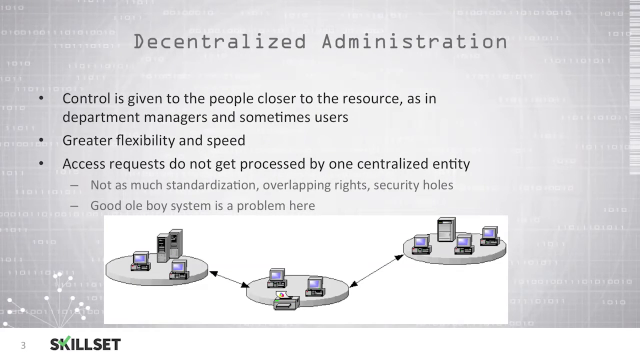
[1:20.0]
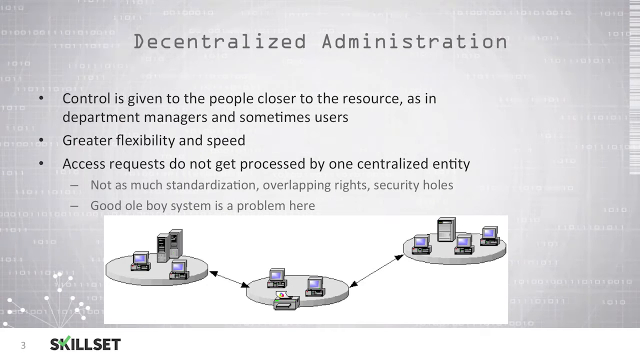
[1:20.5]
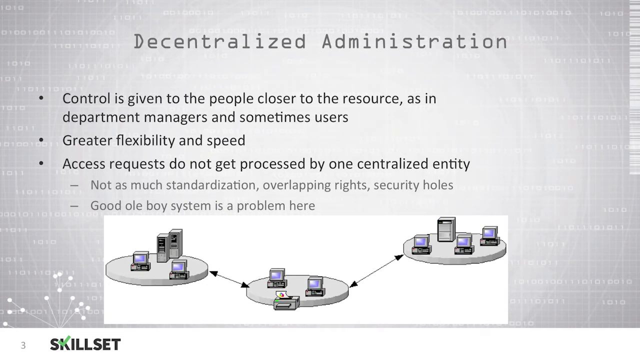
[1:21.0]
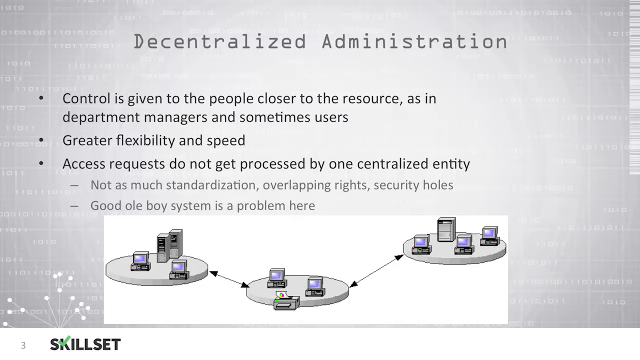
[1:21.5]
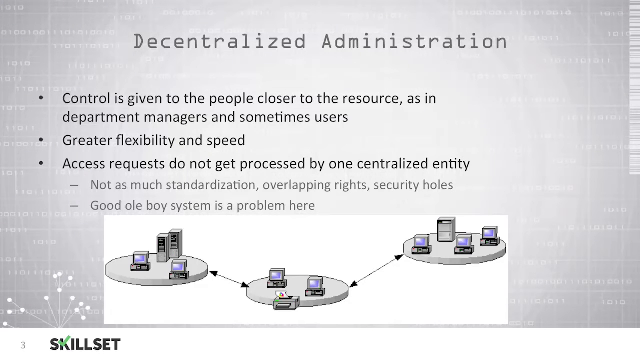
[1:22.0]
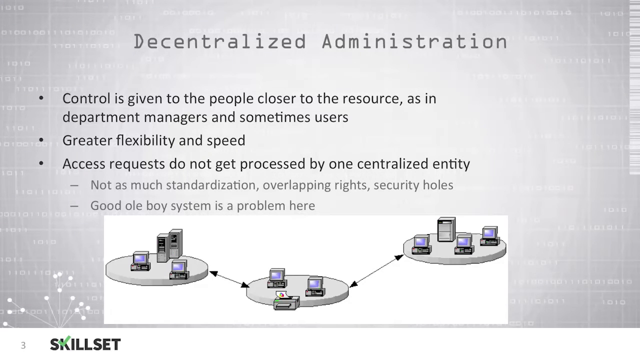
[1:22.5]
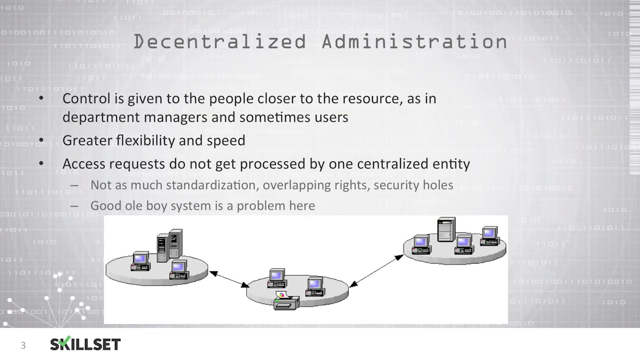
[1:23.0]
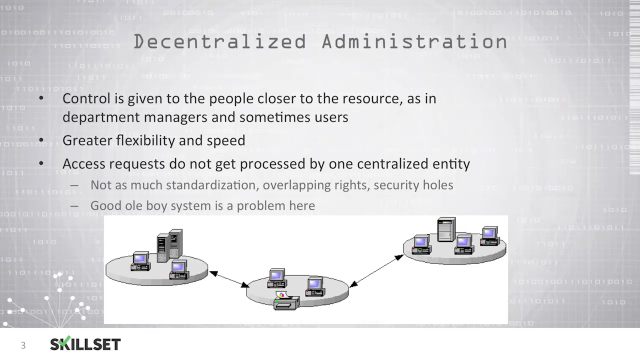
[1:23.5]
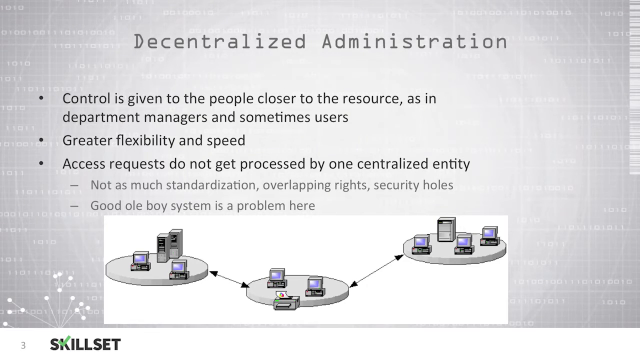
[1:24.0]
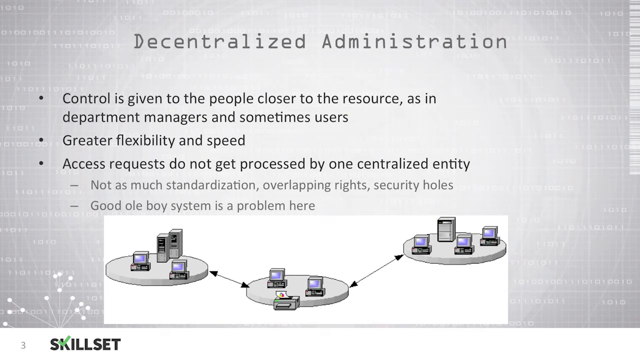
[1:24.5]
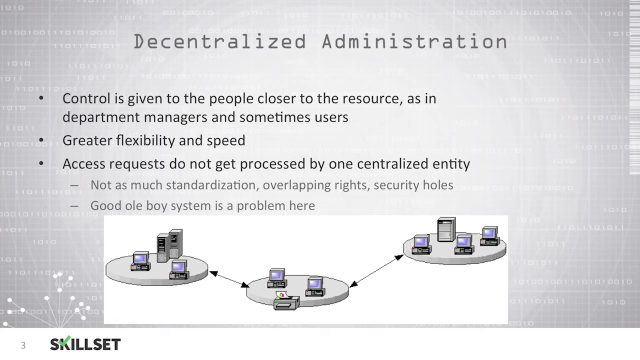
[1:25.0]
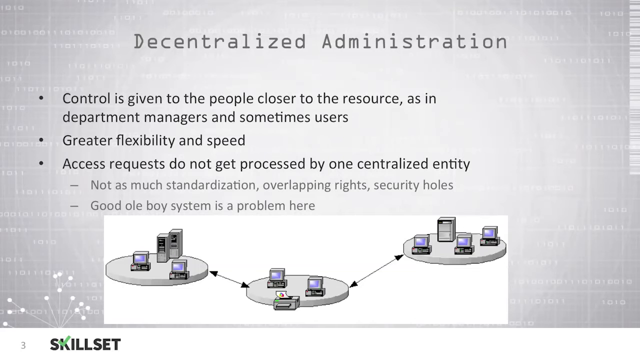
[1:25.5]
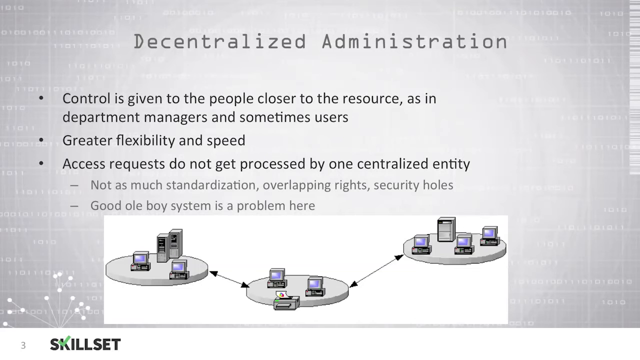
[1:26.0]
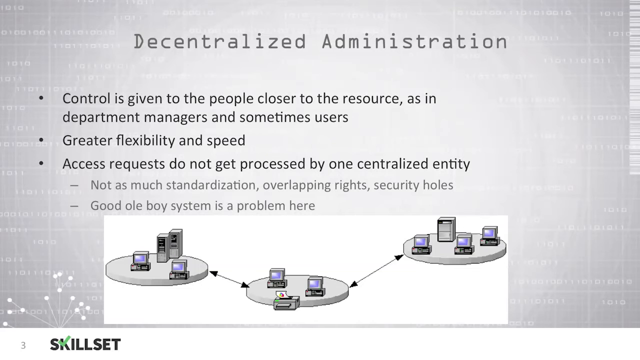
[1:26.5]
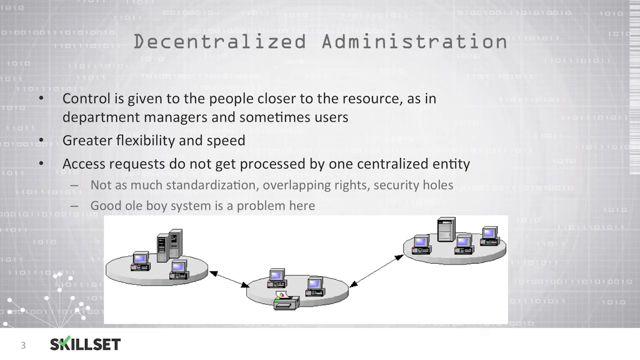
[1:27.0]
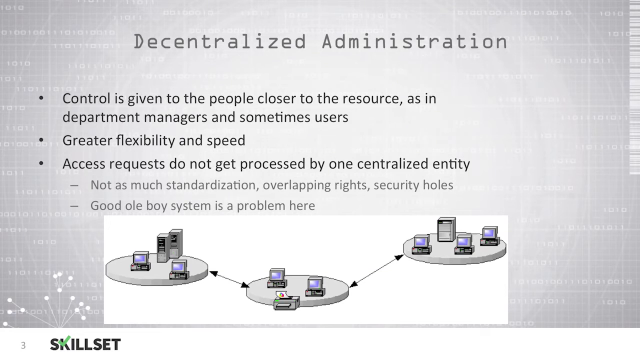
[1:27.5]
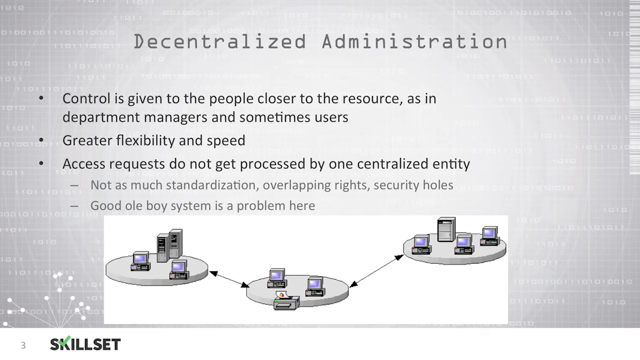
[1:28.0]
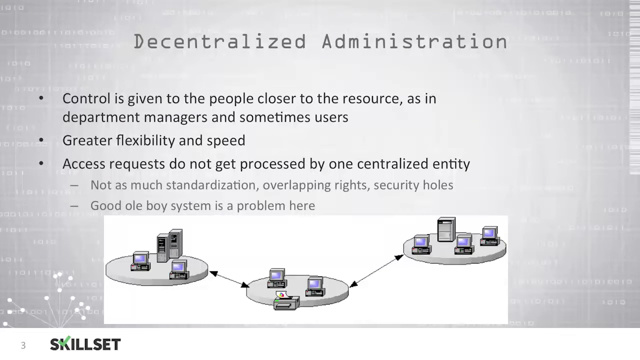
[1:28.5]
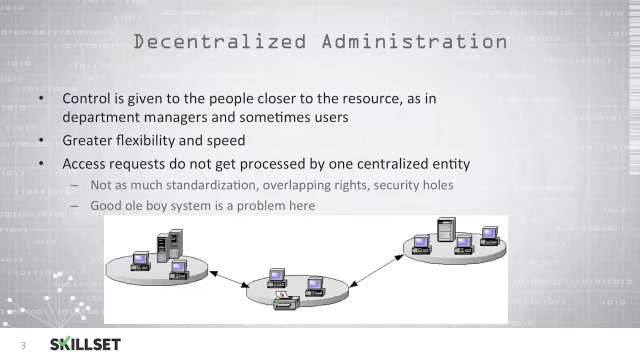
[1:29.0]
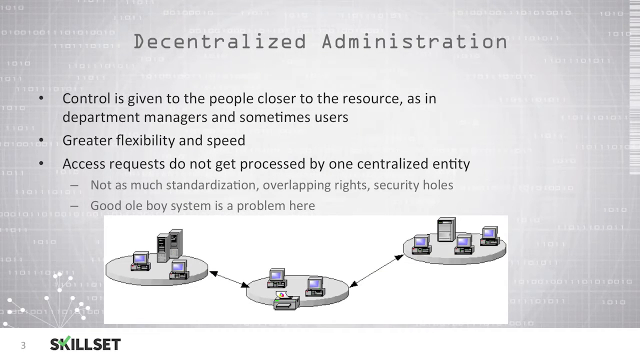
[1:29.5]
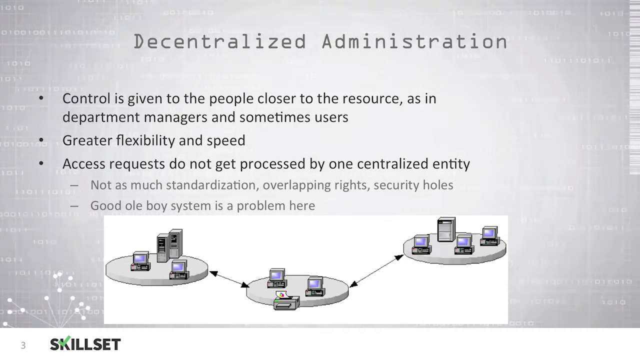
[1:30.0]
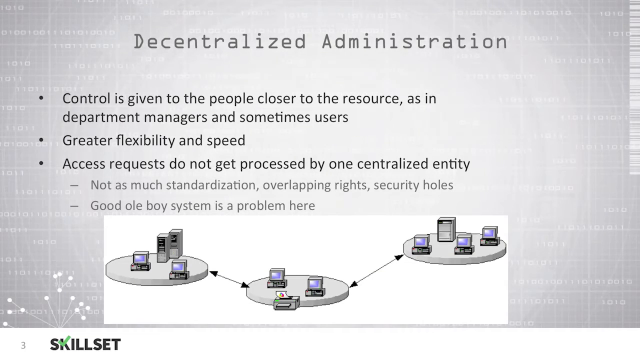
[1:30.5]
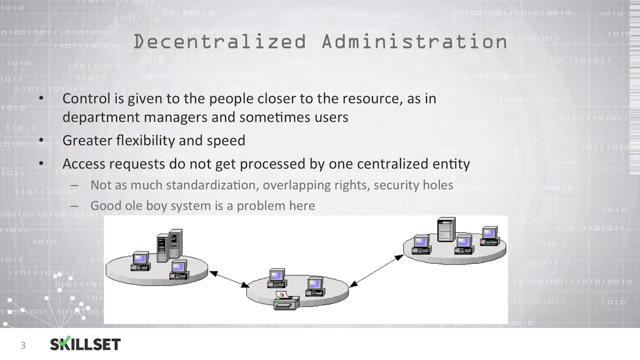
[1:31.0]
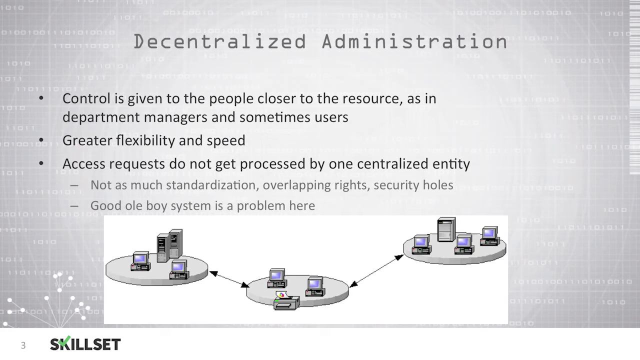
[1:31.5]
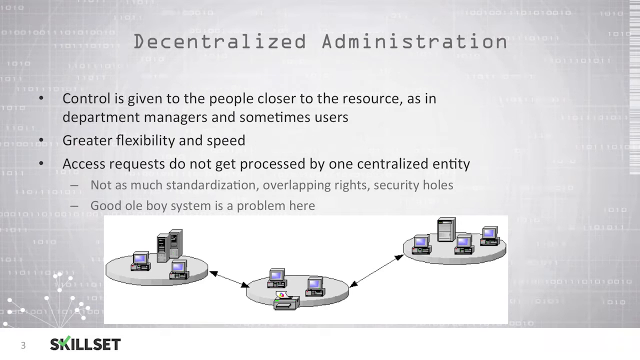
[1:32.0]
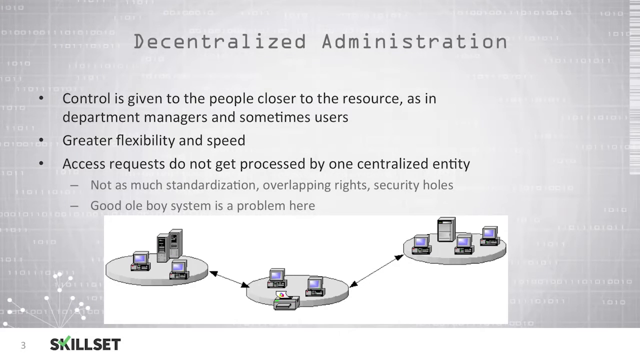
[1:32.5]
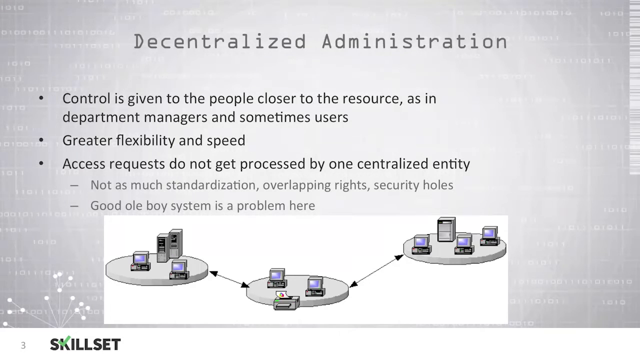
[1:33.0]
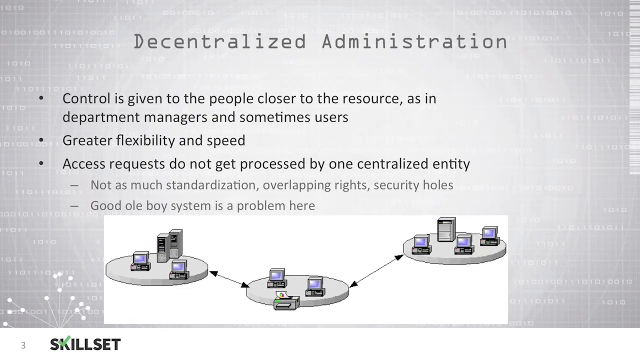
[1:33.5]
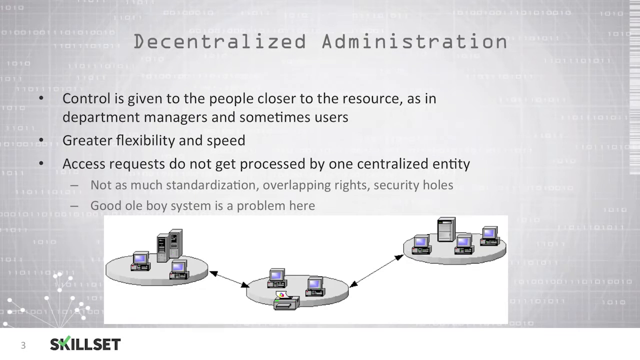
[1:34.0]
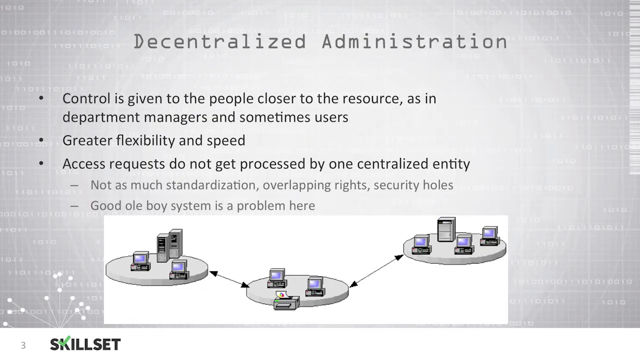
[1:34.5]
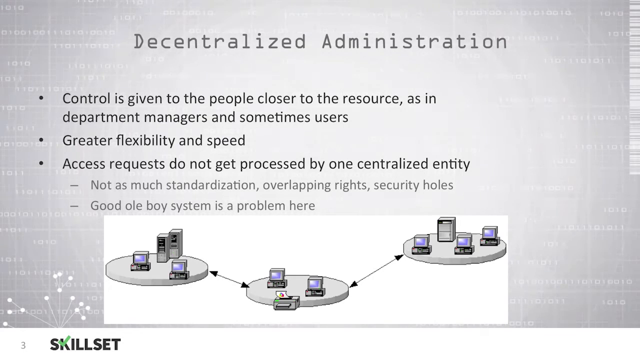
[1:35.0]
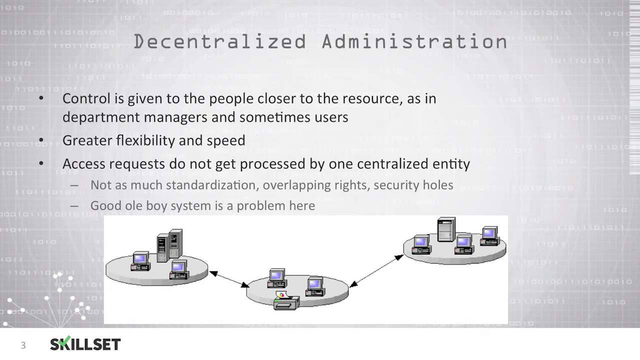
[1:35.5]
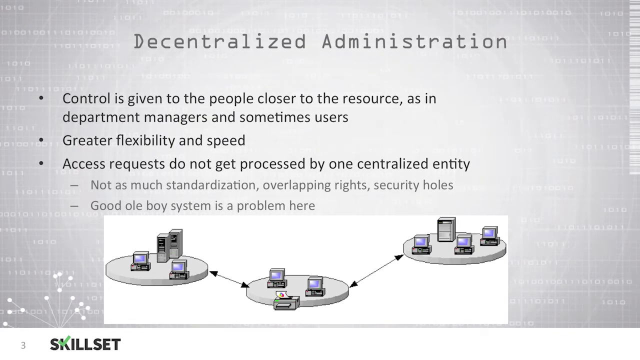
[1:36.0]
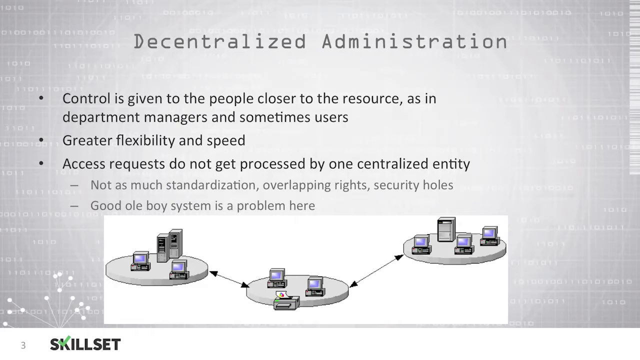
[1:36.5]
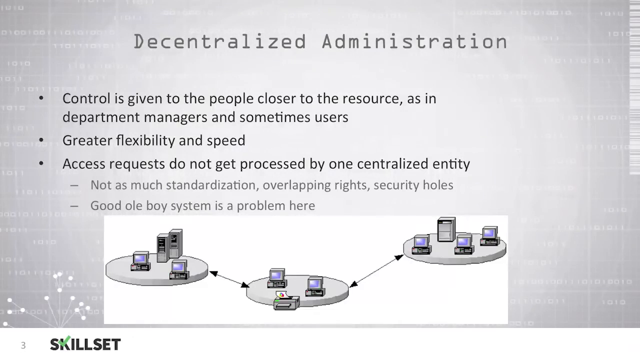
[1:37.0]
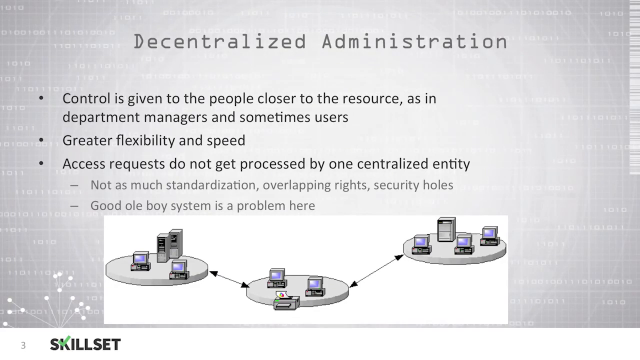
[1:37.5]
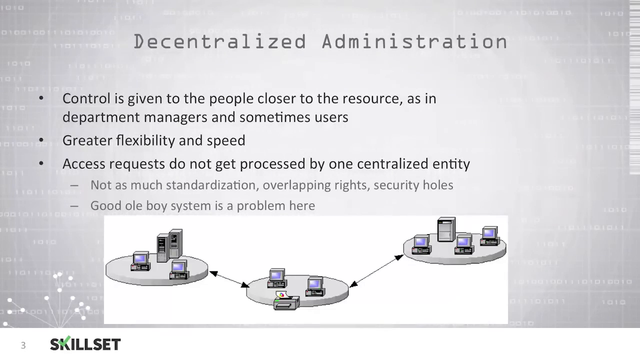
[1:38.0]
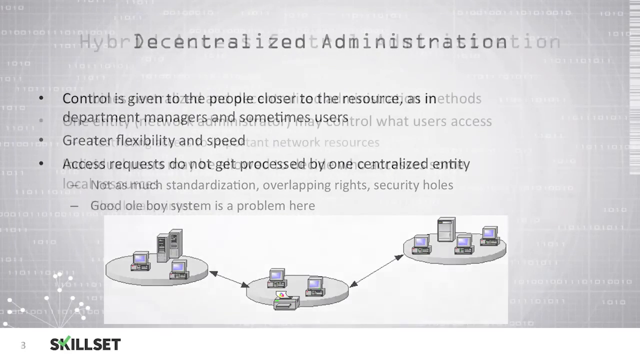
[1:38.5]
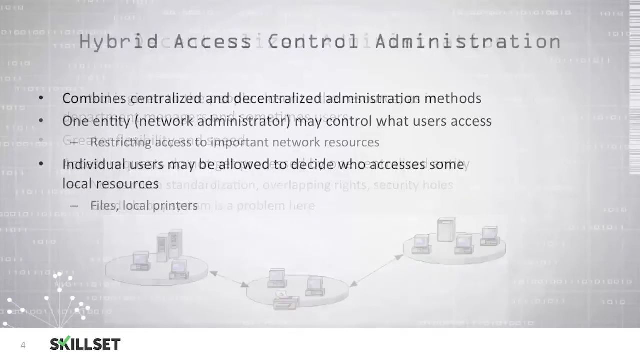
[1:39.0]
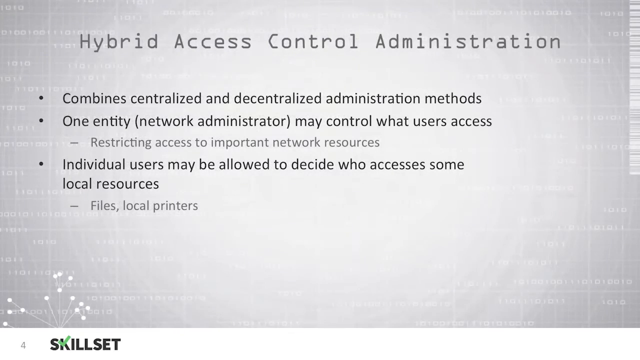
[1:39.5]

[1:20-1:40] The next page has the topic "Hybrid Access Control and Administration" at the top, on the same white gradient background with a slight pattern of ones and zeros toward the outside. There are three main points: "combined centralized and decentralized administration methods"; "one entity (network administrator) may control what user's access", supported by one point, "restricting access to important network issues"; and "individual users may be allowed to decide who accesses some local resources", followed by the support point "files and local printers". At the bottom are the page number and the title "skill sets".